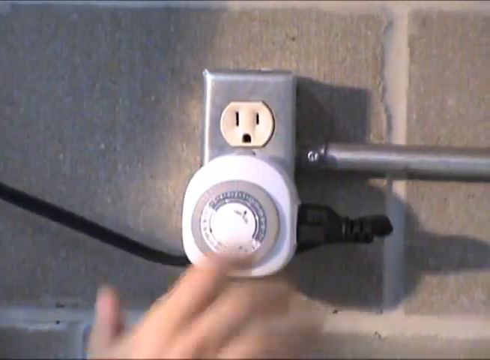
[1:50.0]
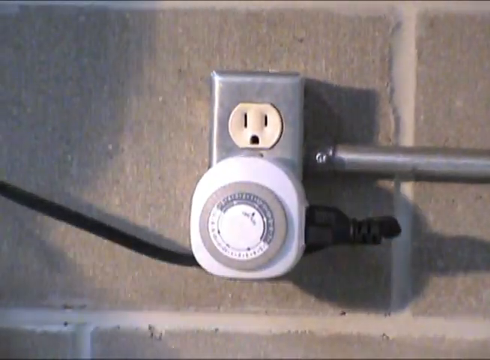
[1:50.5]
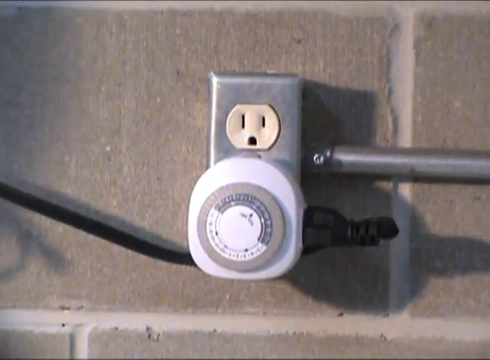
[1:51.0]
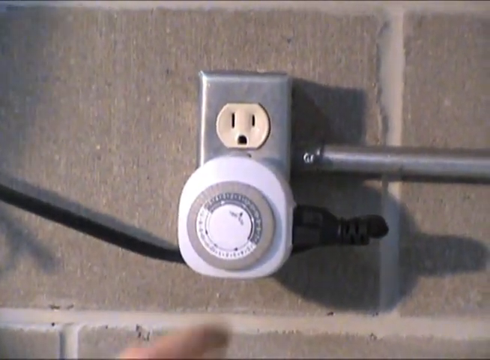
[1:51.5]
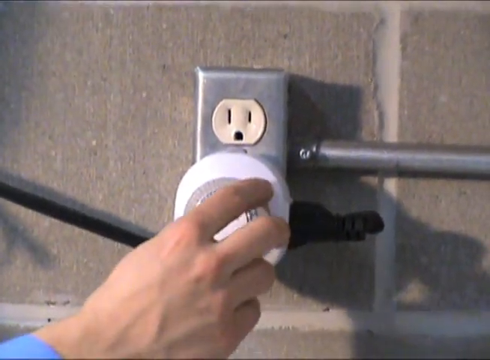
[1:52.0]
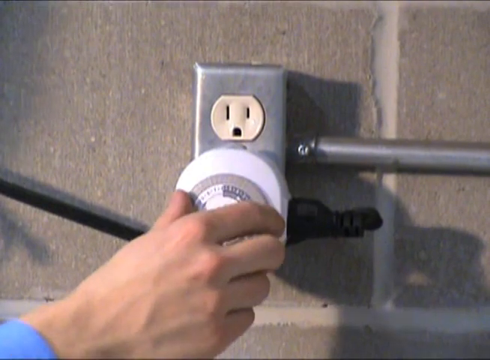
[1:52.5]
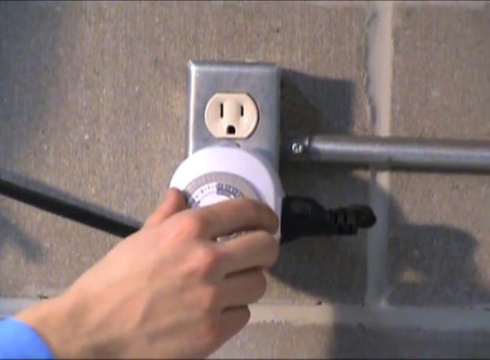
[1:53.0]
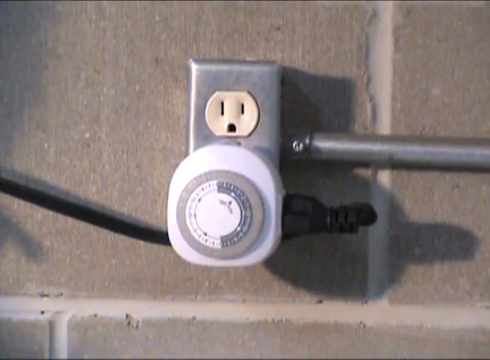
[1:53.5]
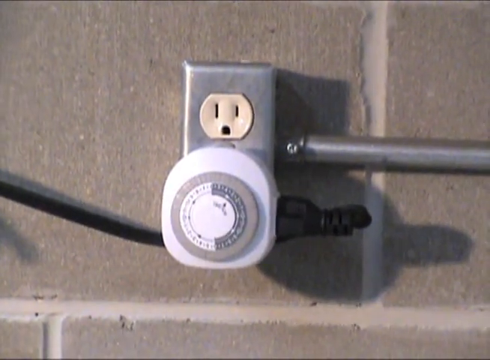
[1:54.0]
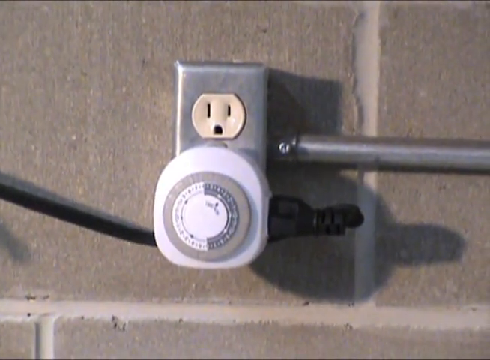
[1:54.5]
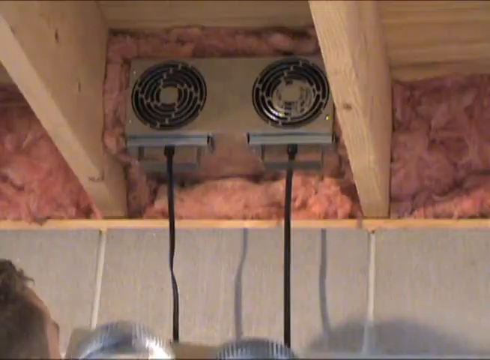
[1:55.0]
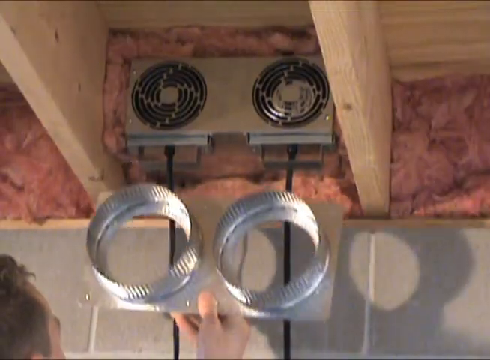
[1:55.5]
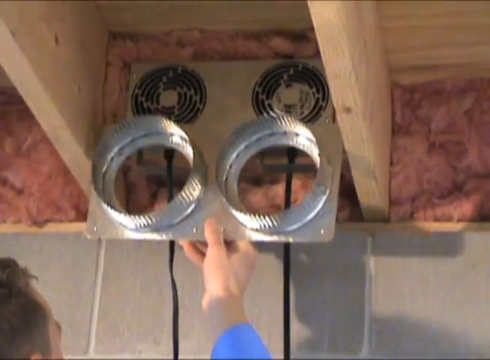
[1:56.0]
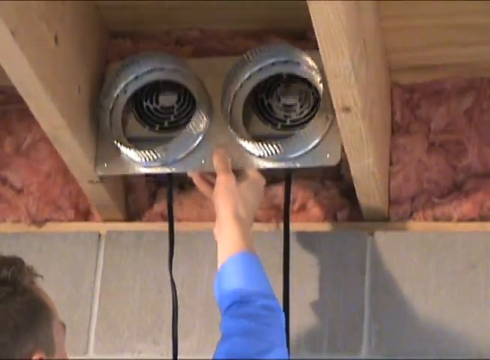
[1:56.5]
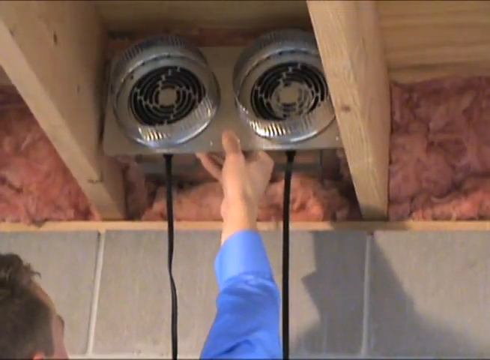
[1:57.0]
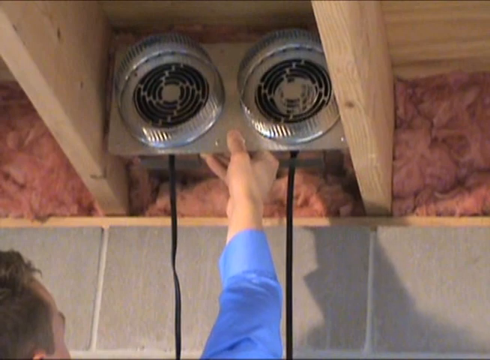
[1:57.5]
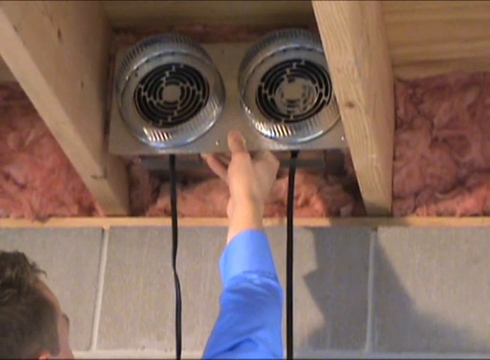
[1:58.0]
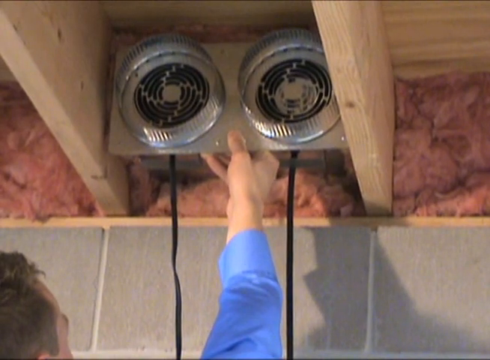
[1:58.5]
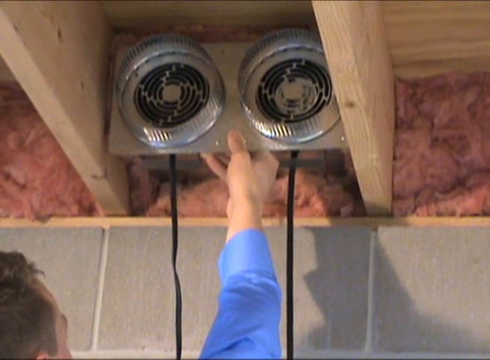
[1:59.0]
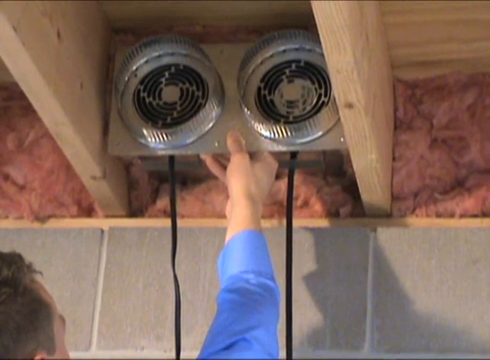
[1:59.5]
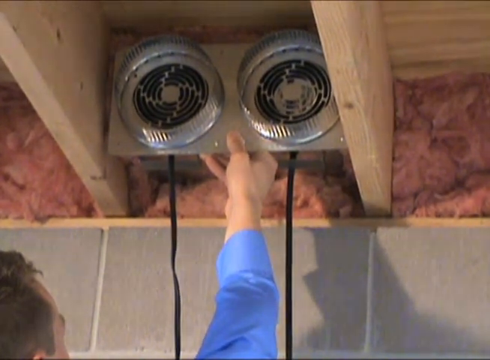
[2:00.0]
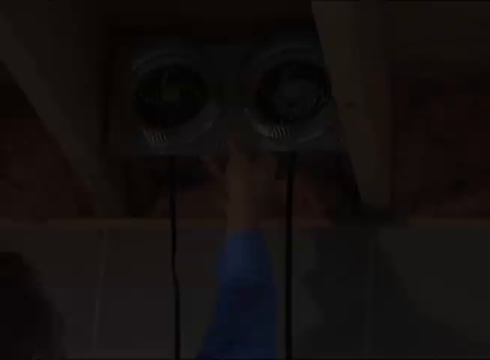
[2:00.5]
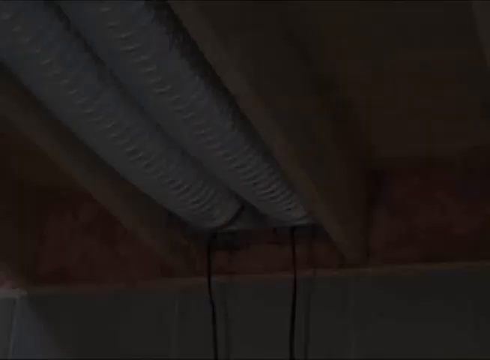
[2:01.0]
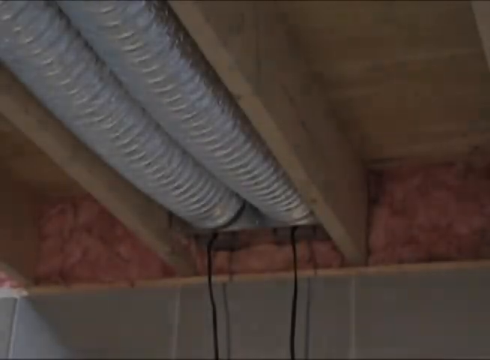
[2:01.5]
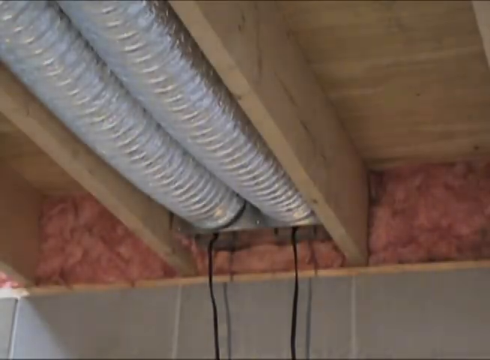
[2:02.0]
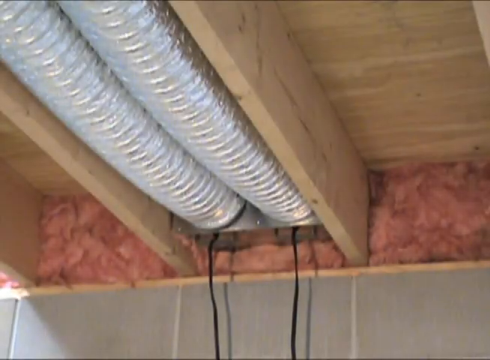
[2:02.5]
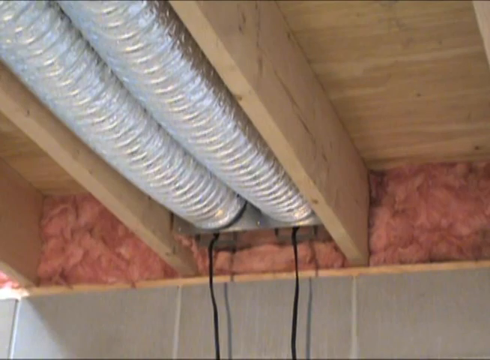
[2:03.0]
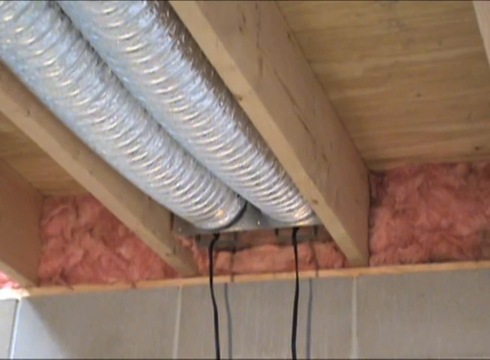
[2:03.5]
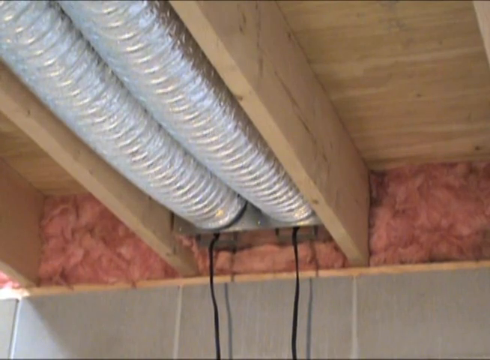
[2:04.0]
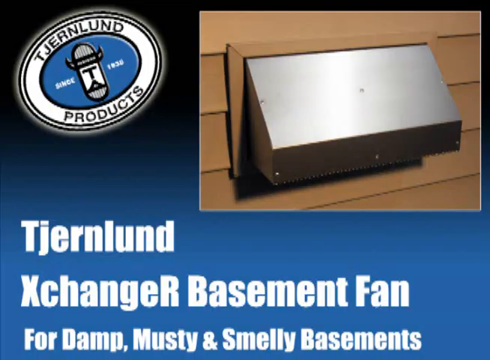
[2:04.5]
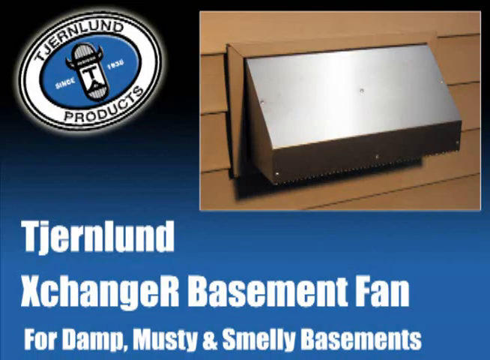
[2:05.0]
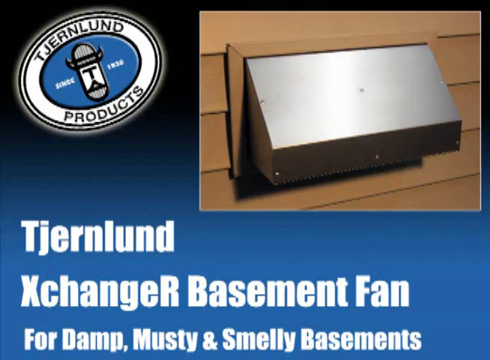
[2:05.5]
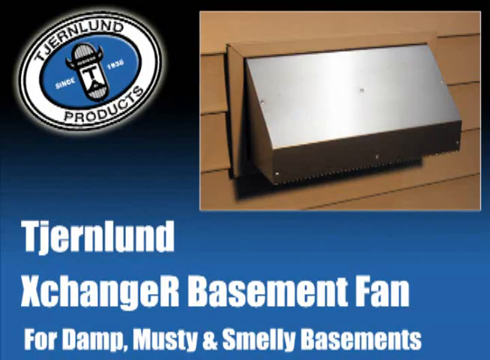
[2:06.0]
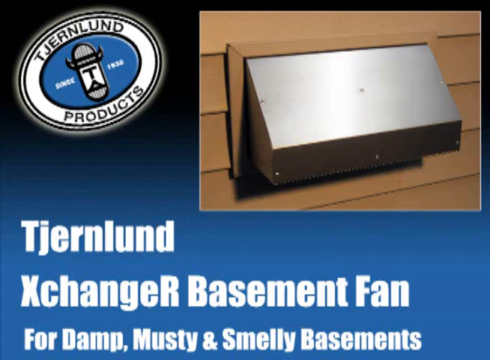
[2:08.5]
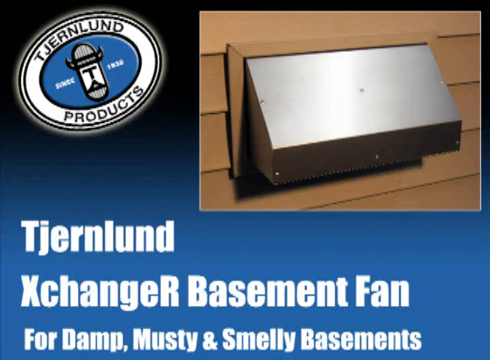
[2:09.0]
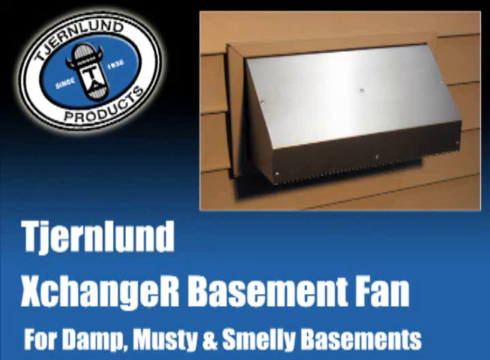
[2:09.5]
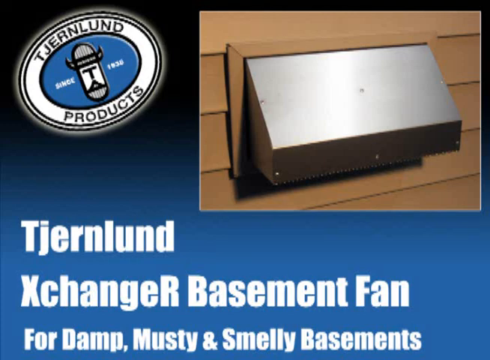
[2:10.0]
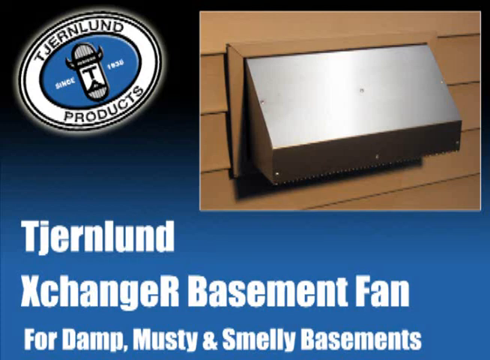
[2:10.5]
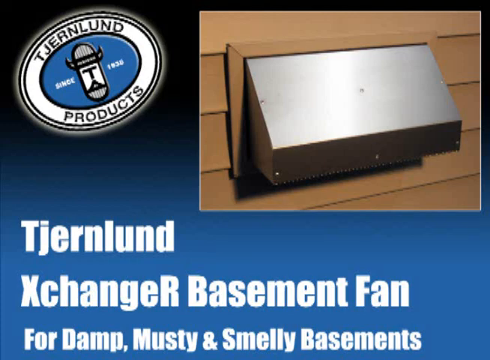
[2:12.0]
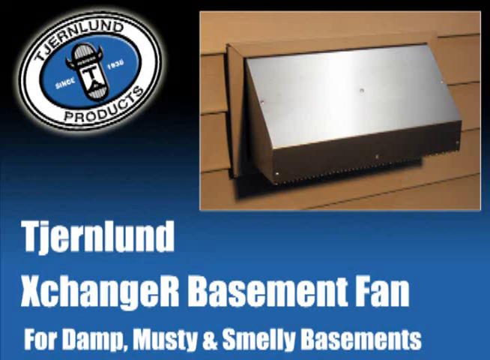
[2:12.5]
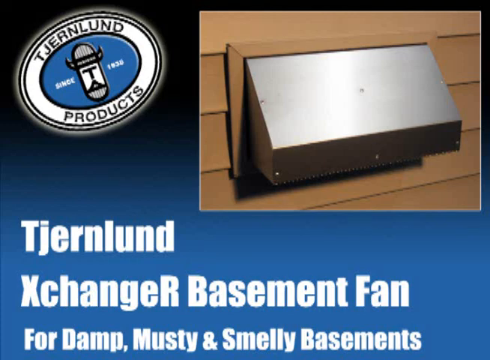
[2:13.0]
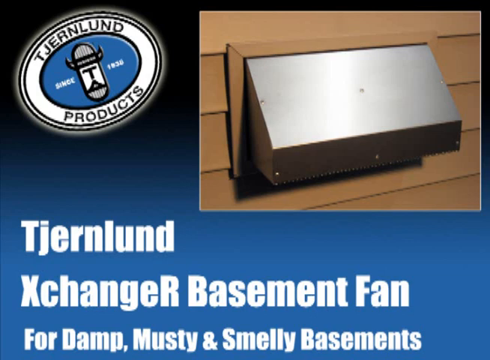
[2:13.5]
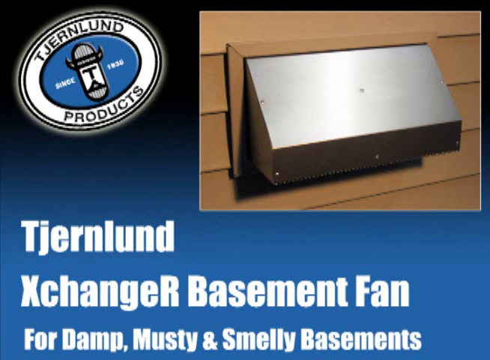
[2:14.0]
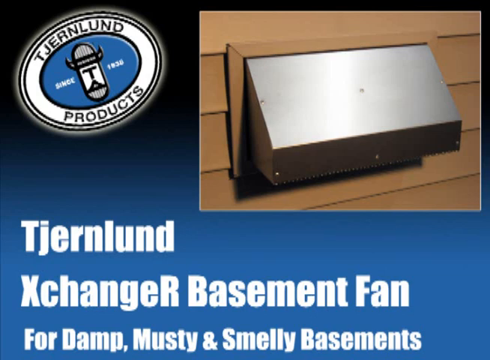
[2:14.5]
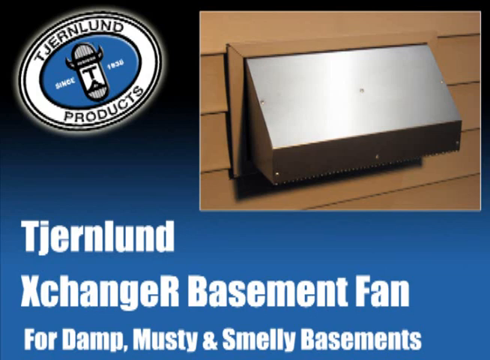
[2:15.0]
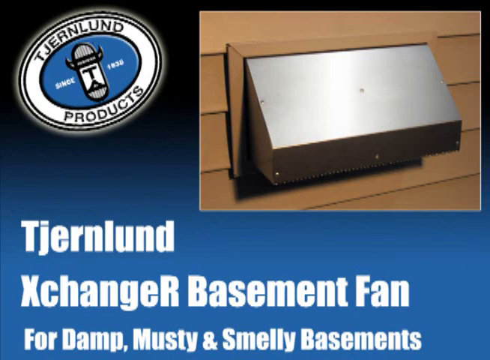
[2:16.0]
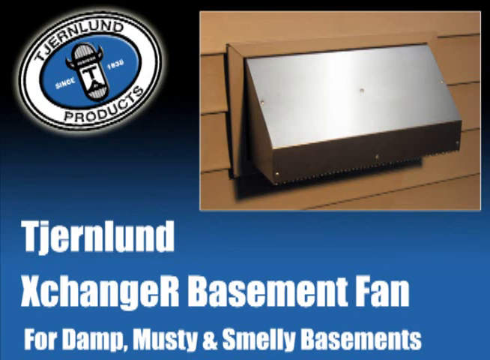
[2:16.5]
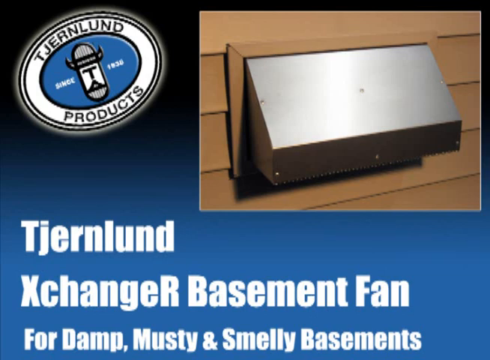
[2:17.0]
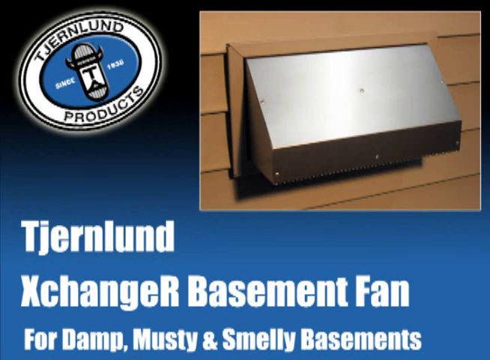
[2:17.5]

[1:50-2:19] A power outlet, a metal box with two plug sockets and a metal cable conduit heading off to the right, is in front of a breeze block wall in the background. A circular device is plugged into the power socket; it has a circular gray ring with a rheostat dial inside it and looks like an automatic timer. A black electrical cable runs from the right-hand side of the timer, then down and off to the left, where it plugs into the control for the basement fan unit. A man's hand is briefly visible over the timer. The timer dial shows a number of numbers and an arrow, and the man turns the timer left and right. The view changes back to the basement fan unit between the rafters, where the man attaches some kind of cover with two circular holes. Two long pipes, silvery metal ducts, are plugged into this cover, presumably to conduct air out of the basement.